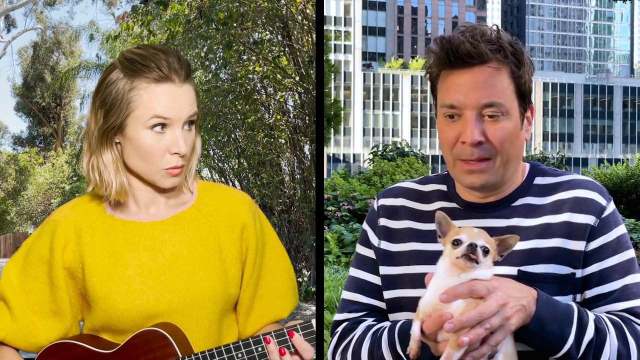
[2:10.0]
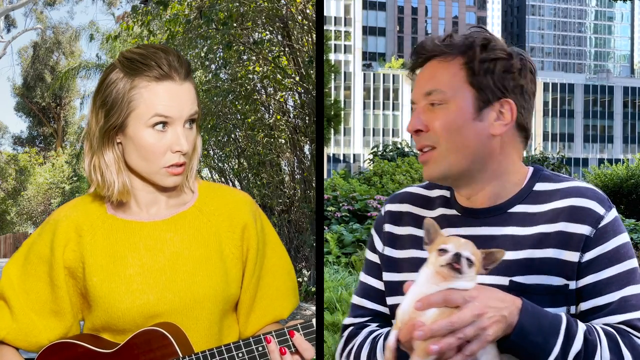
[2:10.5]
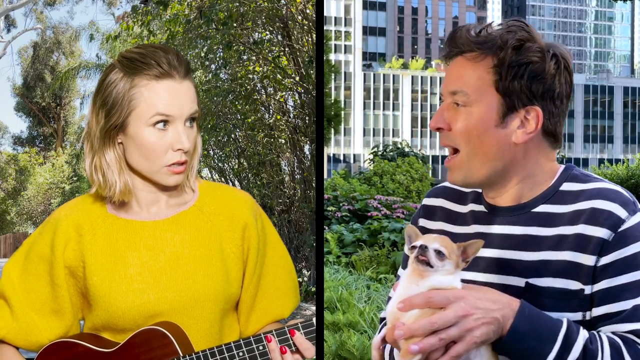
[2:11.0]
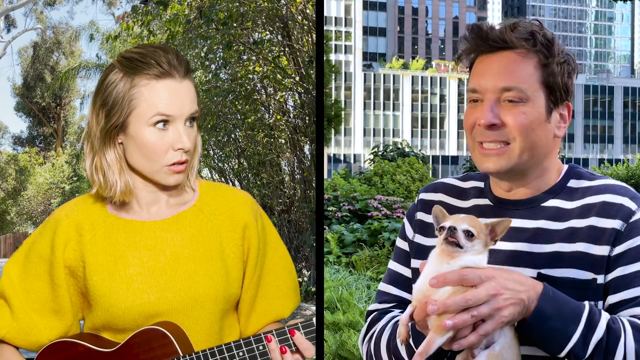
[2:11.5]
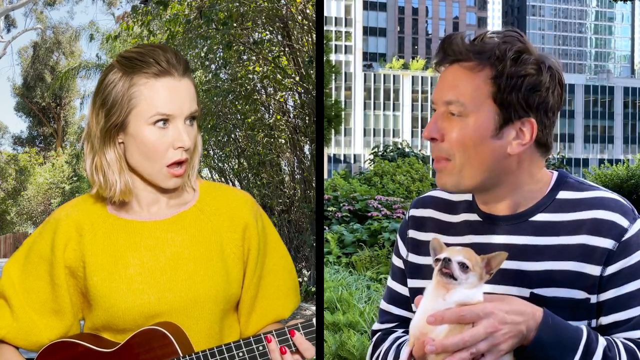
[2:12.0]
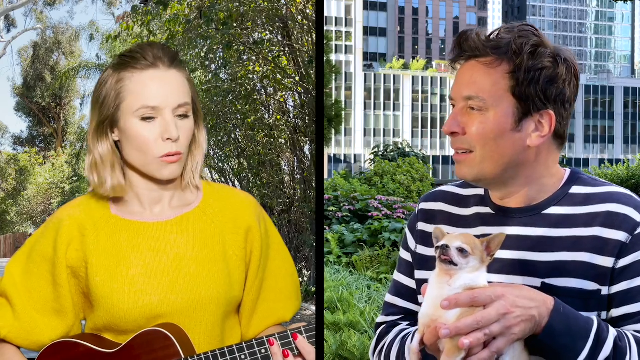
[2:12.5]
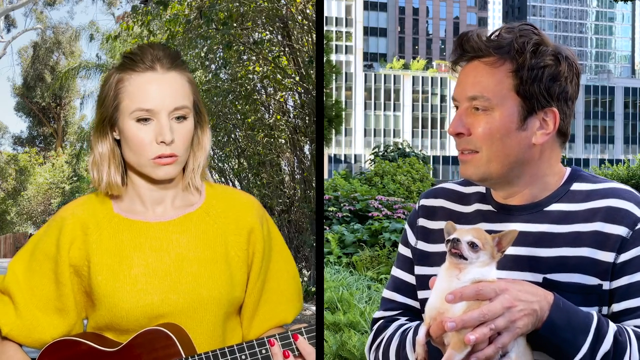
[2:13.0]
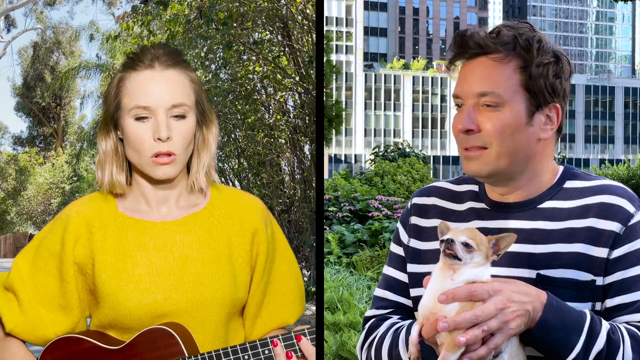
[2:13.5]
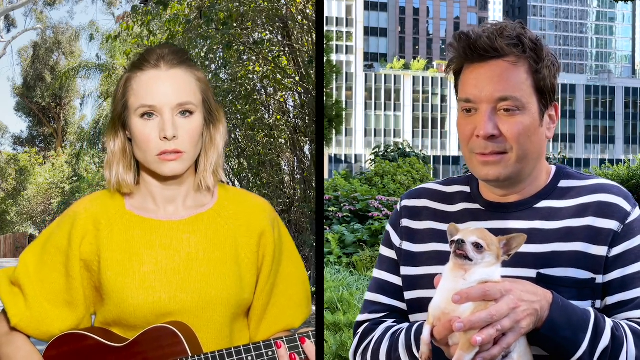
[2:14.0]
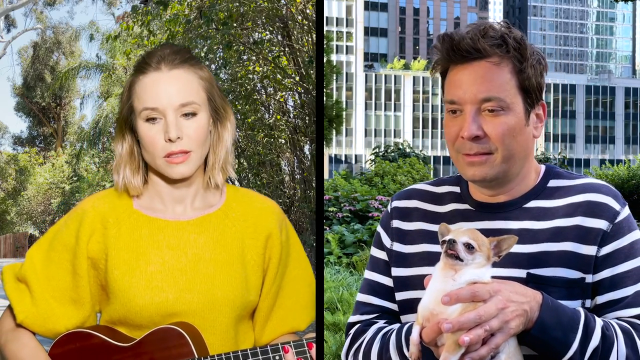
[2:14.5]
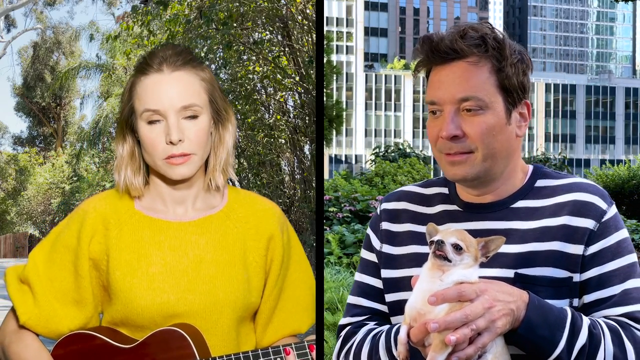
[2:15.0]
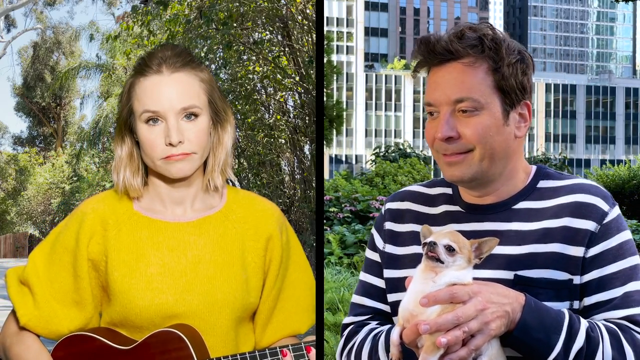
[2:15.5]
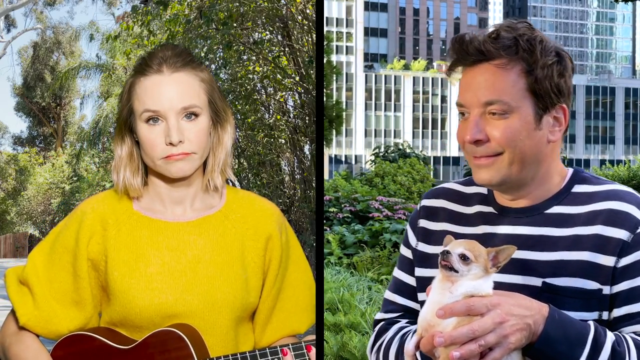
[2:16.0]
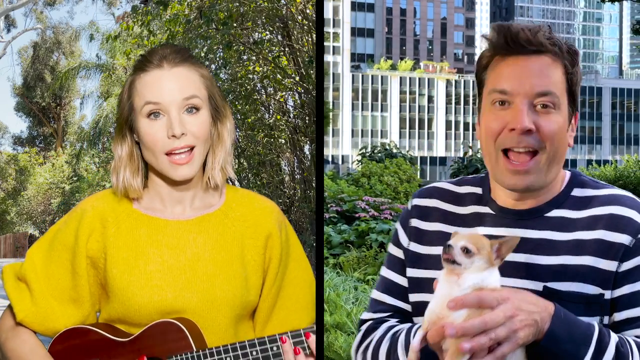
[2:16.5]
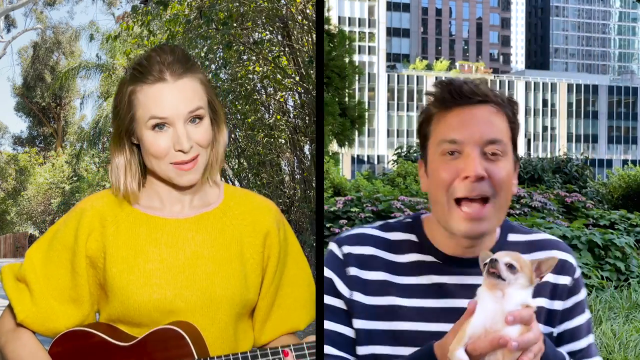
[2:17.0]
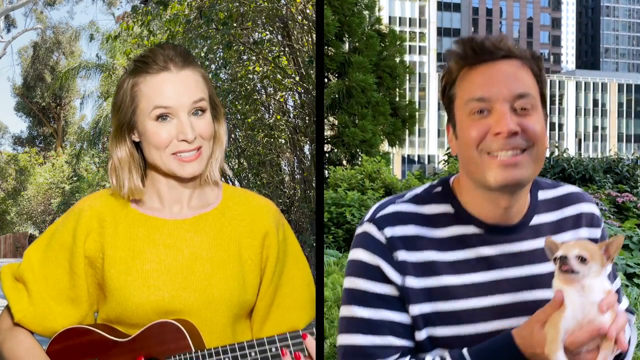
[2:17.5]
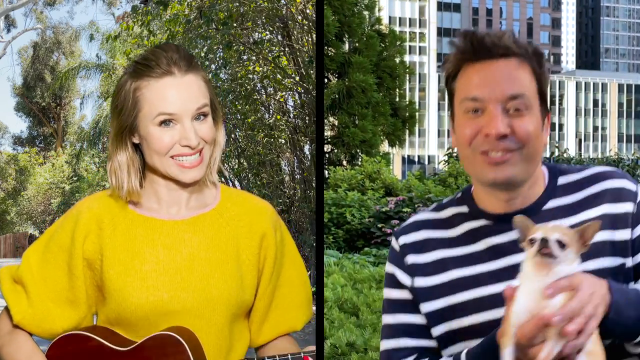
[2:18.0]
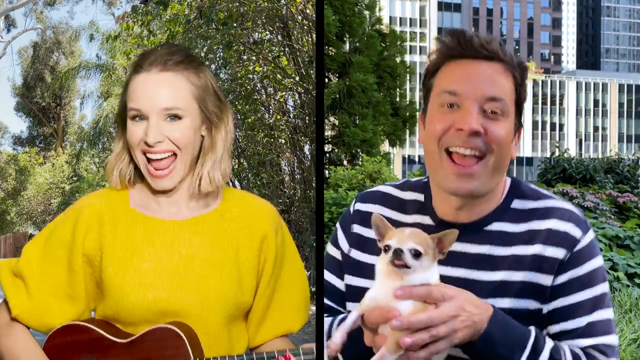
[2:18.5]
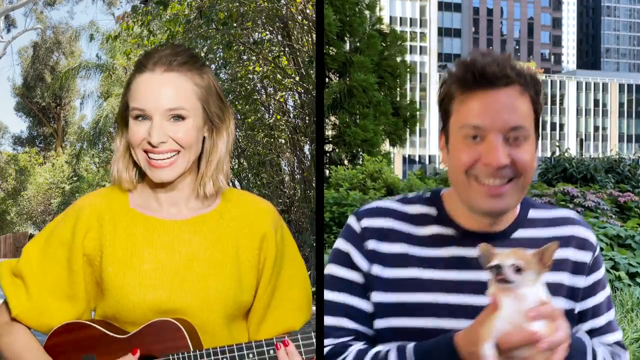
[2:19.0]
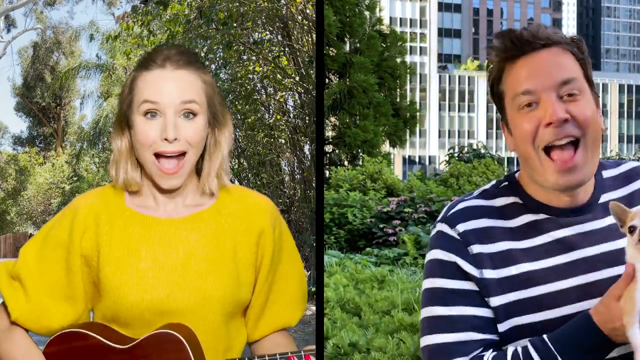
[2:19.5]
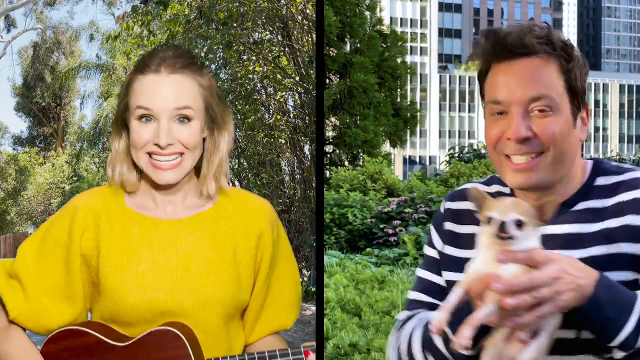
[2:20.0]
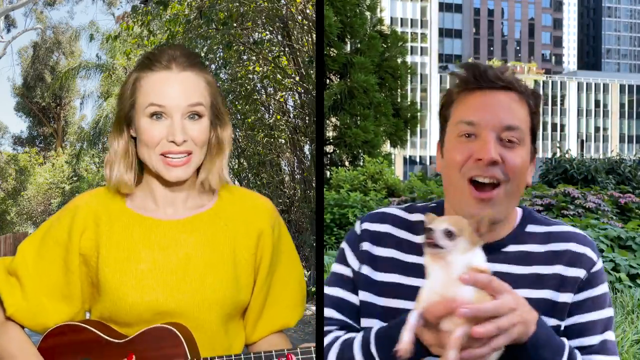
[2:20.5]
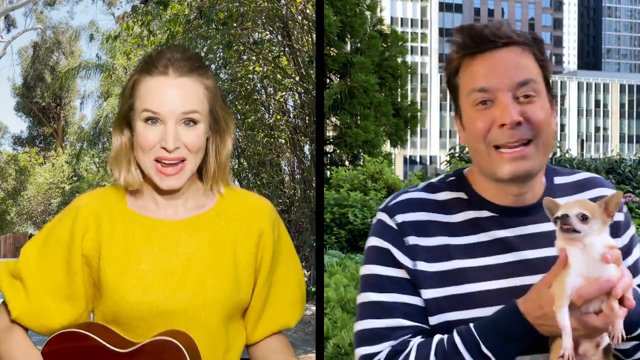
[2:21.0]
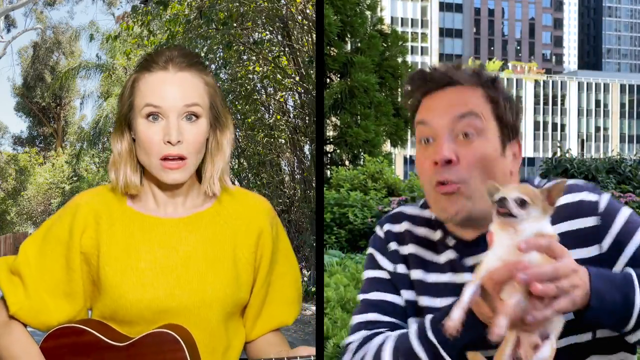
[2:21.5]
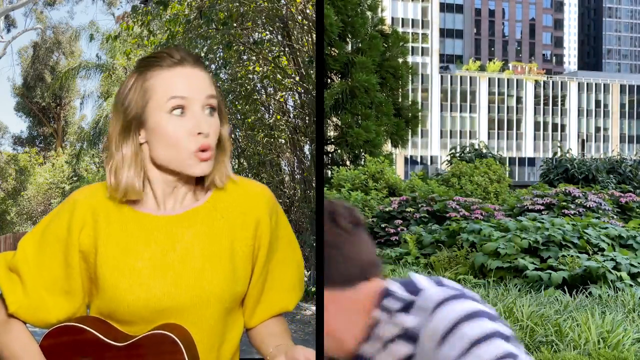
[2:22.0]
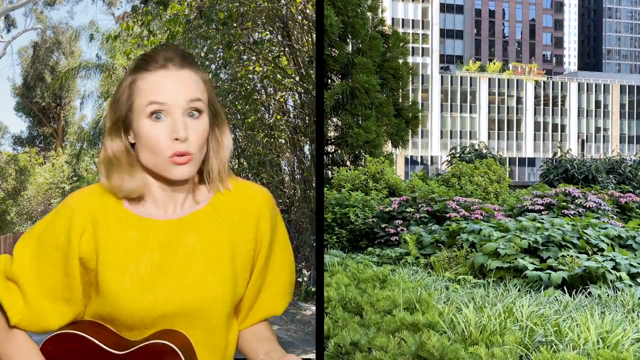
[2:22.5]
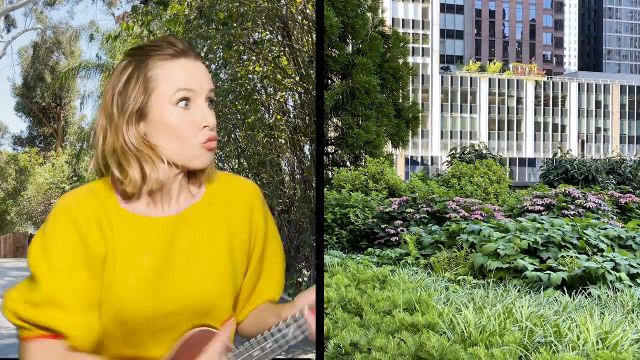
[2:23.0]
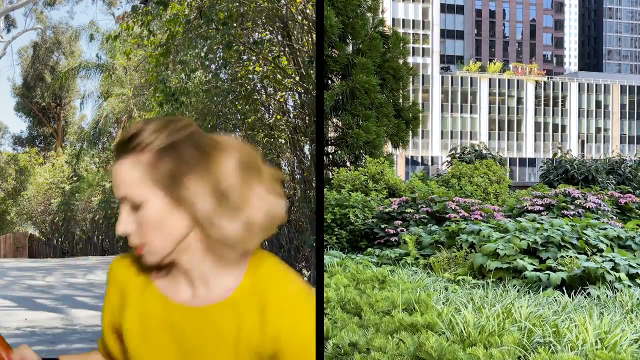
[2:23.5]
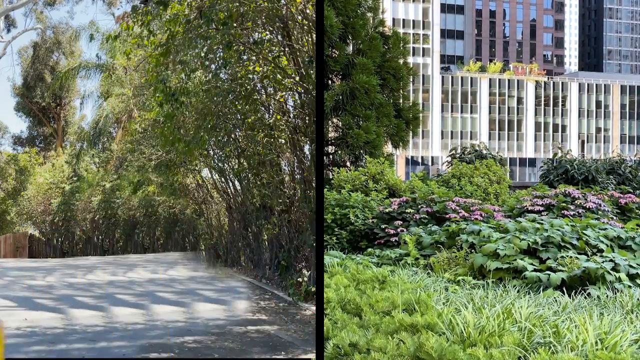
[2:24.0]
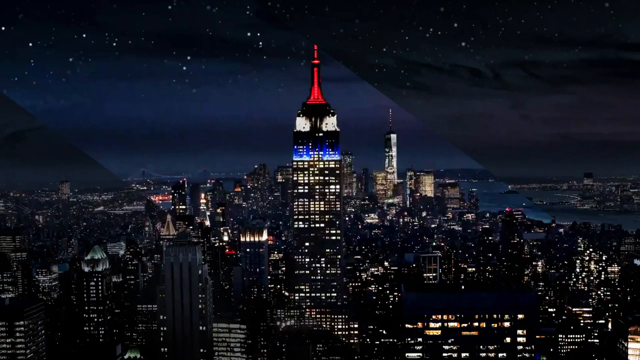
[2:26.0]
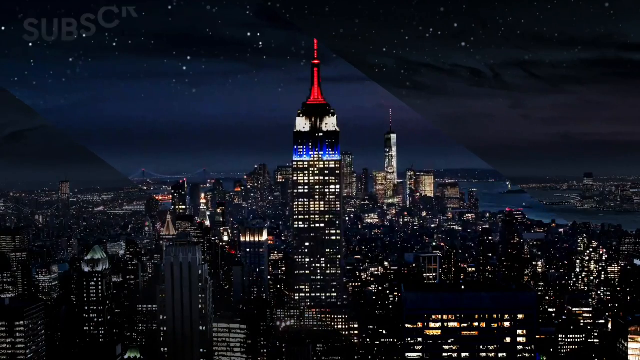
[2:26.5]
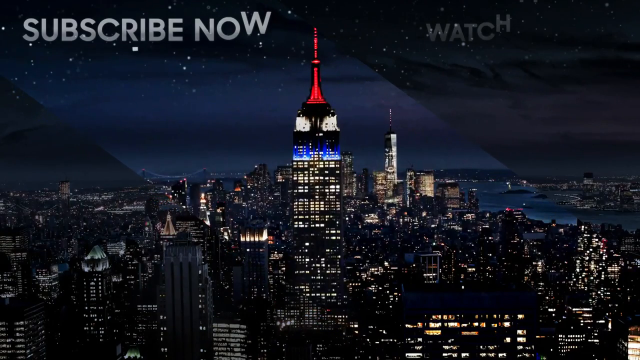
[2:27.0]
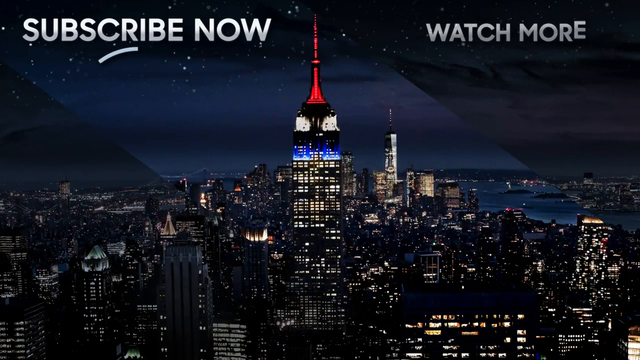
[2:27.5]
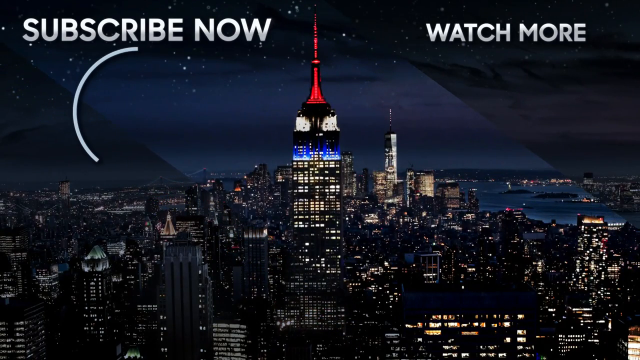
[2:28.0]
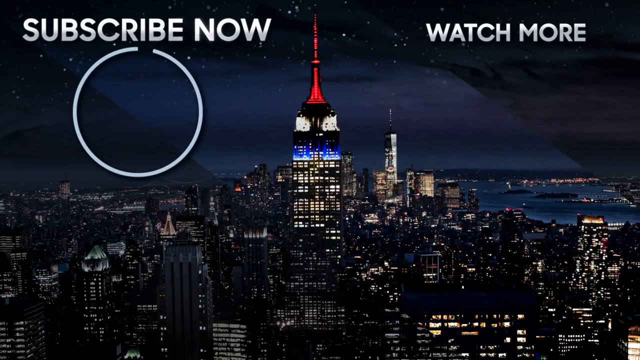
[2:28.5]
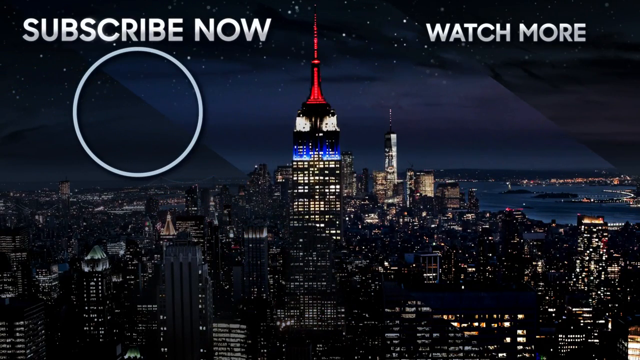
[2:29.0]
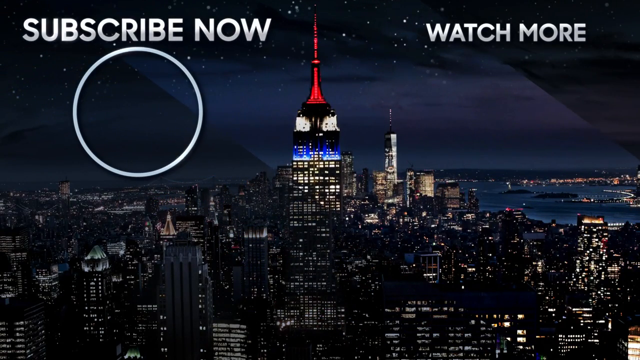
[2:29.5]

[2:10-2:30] In a split screen, the man in the blue and white striped shirt holding the Chihuahua is on the right and the woman with the yellow sweater and blonde hair is on the left, holding the guitar in her hand. They talk to each other: he talks, she listens, then she responds and kind of looks puzzled. They break out in song; he dances, swinging back and forth while holding the Chihuahua, and she plays the guitar as they sing. Suddenly the man looks to his left, is startled and takes off running, and the woman sees him and takes off running too; both run off toward the left. The split screen then shows only the empty park on the right and an empty driveway on the left.